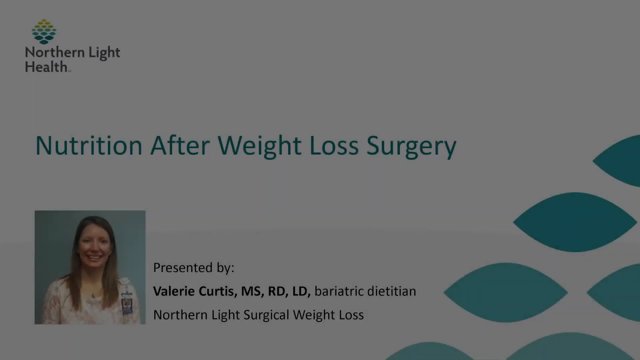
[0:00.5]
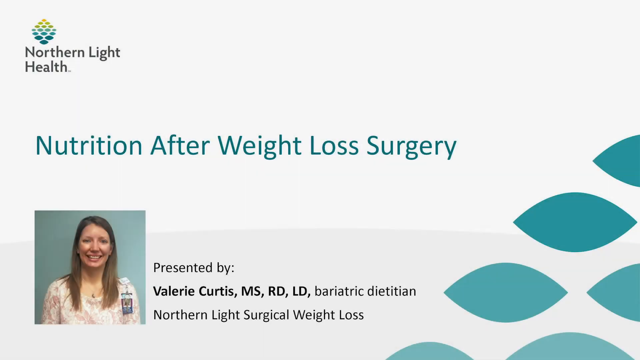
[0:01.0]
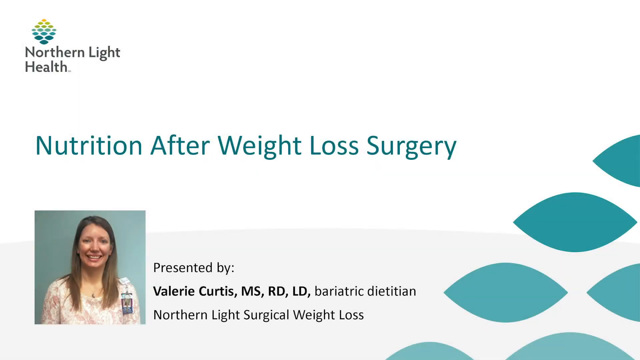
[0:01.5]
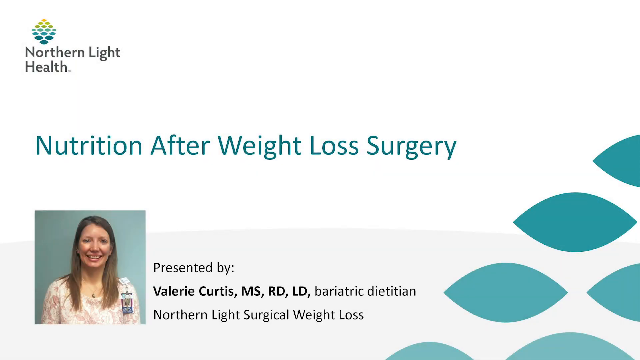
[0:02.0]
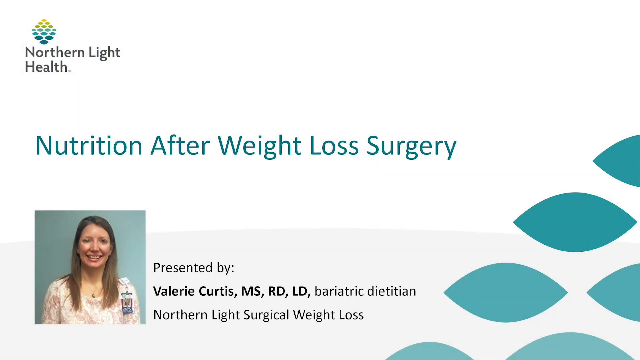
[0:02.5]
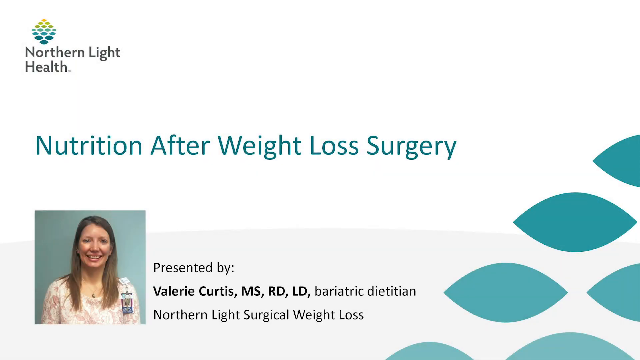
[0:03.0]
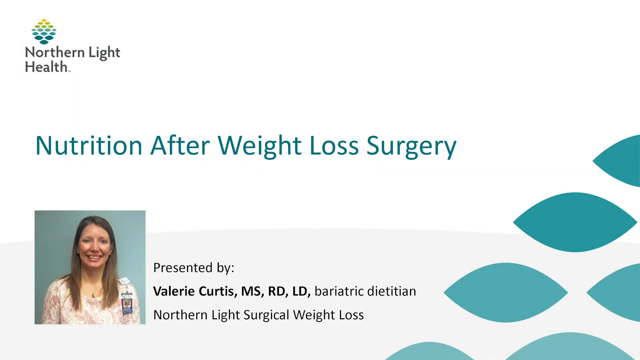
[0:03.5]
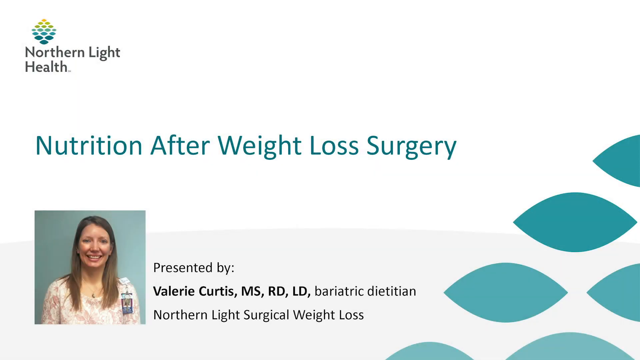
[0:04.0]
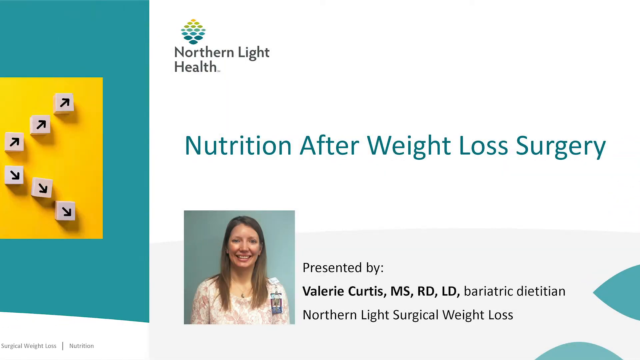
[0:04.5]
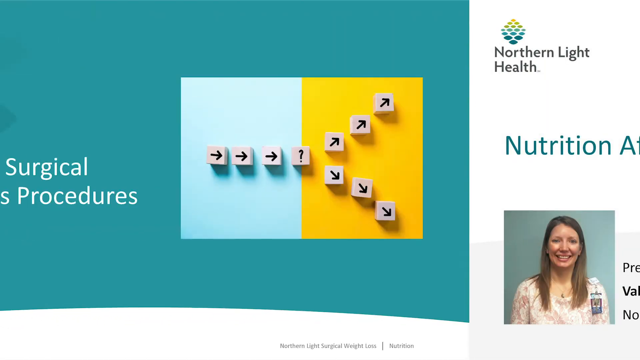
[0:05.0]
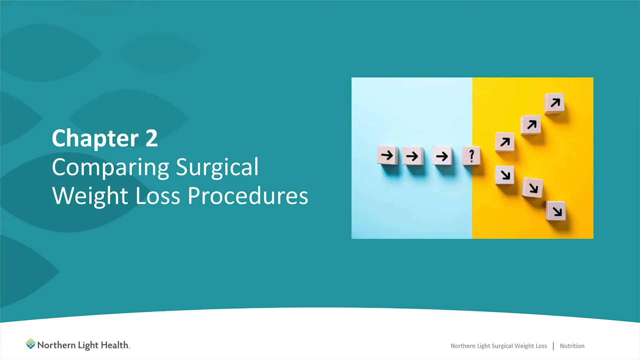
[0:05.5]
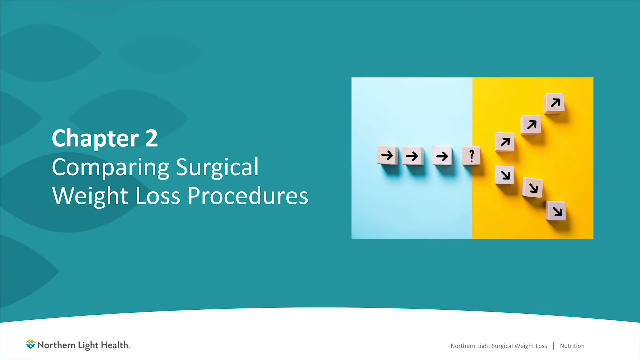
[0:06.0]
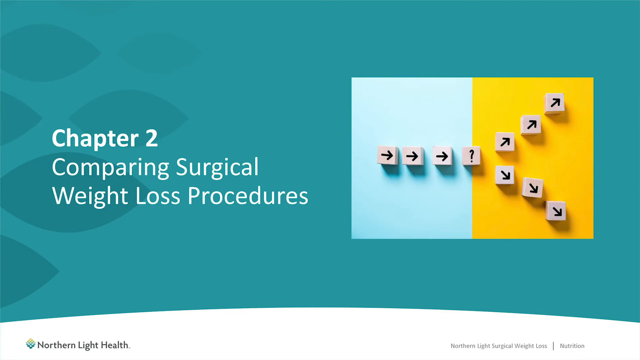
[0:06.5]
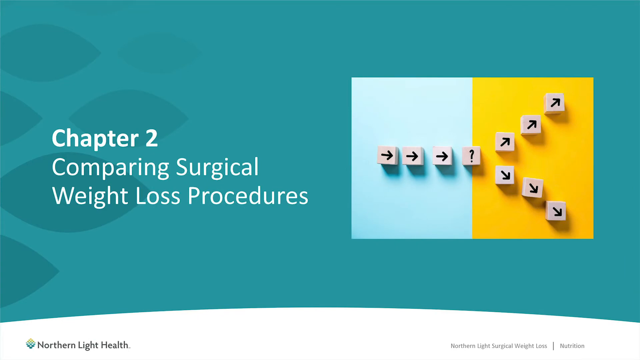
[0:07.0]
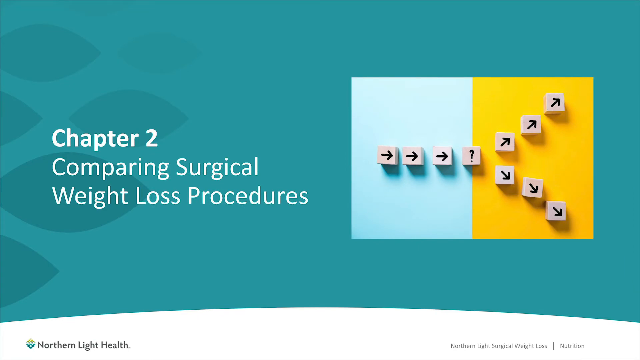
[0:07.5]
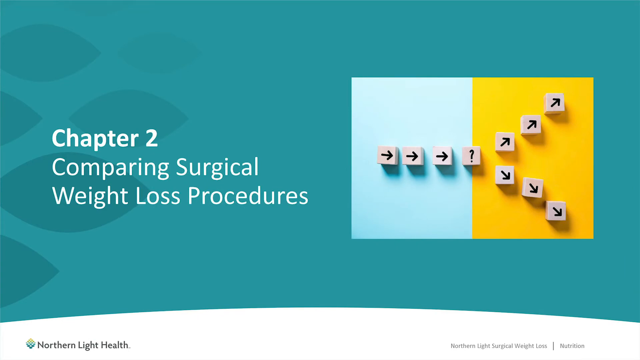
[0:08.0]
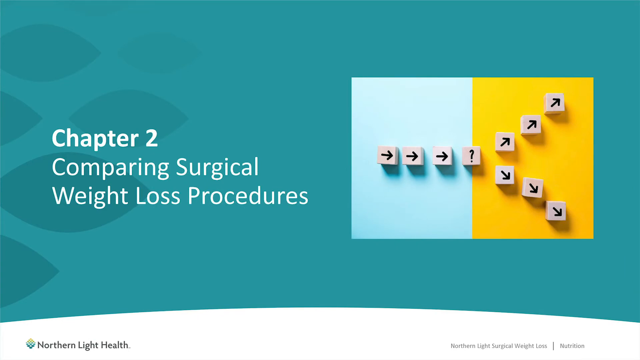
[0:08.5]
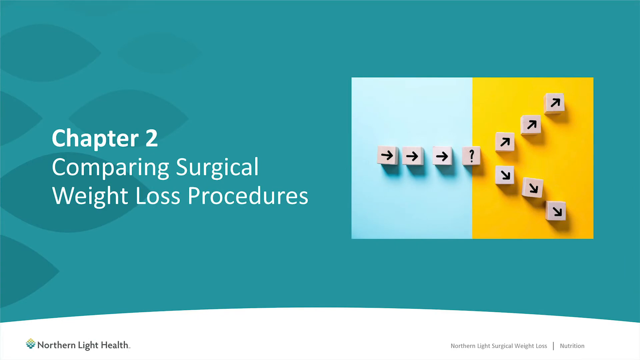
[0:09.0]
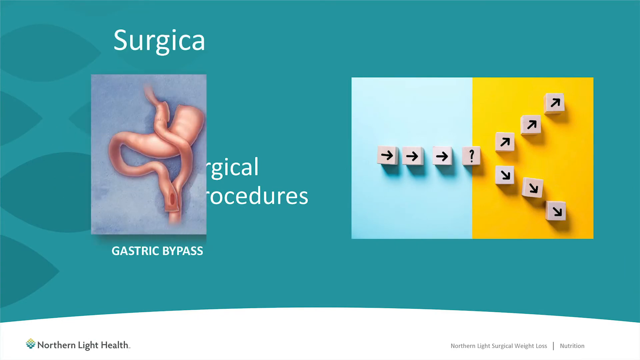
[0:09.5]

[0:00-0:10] A slideshow presentation is on screen. In the upper left-hand corner is a yellow, green, and blue logo with the words "Northern Light Health" beneath it. Below that is the title of the presentation, "Nutrition After Weight Loss Surgery." In the bottom left-hand corner is a photo of a smiling woman with blonde hair who is a healthcare professional. Next to her photo are the words "presented by Valerie Curtis, MSRD LD Bariatric Dietician, Northern Light's Surgical Weight Loss." The slide's background is white. The next slide reads "Chapter 2, Comparing Surgical Weight Loss Procedures" and has an image with a blue half and a yellow half, with several blocks with arrows laid out on this background.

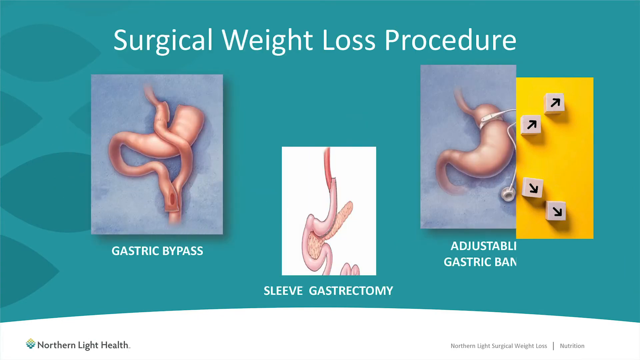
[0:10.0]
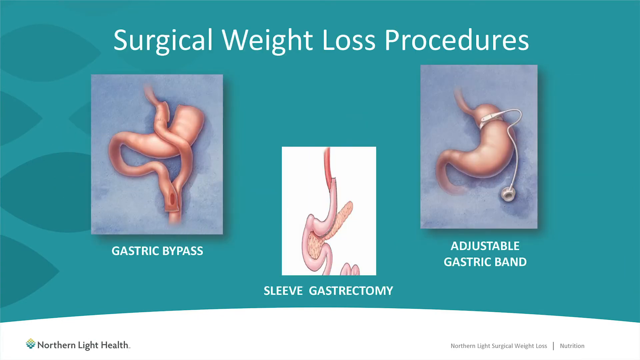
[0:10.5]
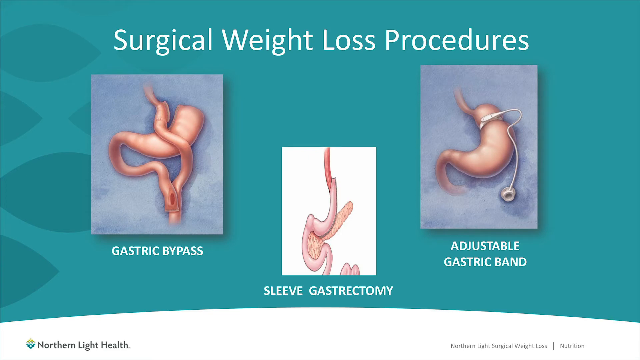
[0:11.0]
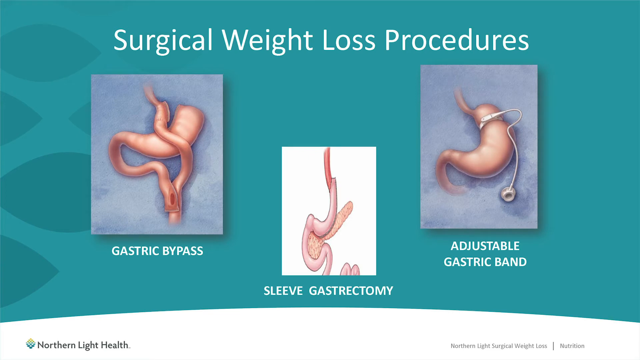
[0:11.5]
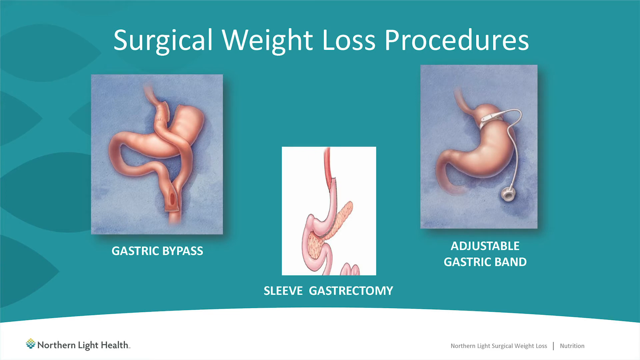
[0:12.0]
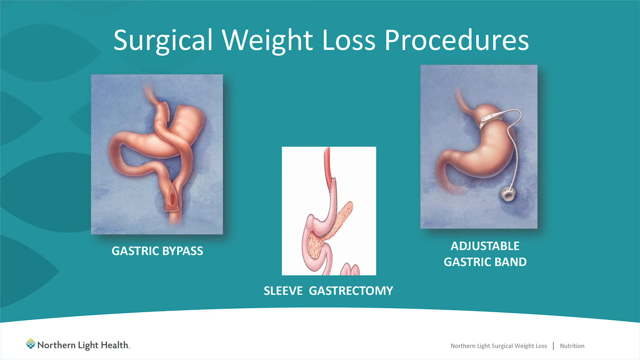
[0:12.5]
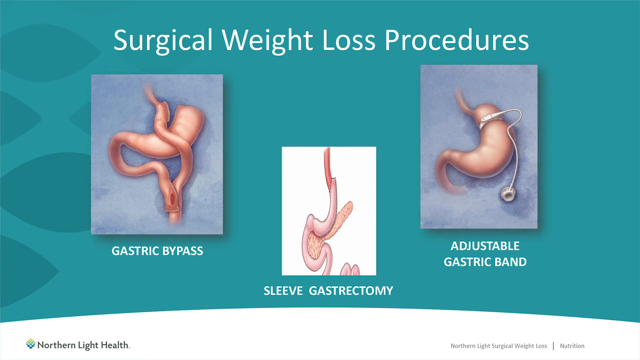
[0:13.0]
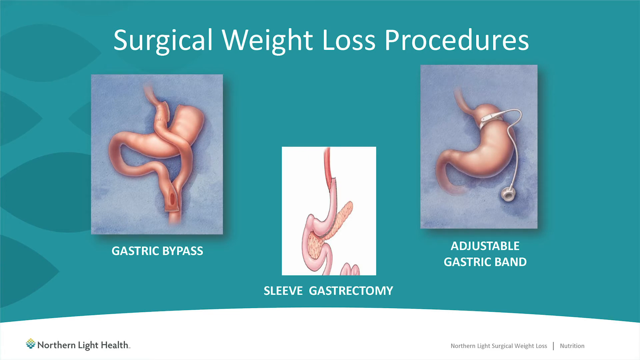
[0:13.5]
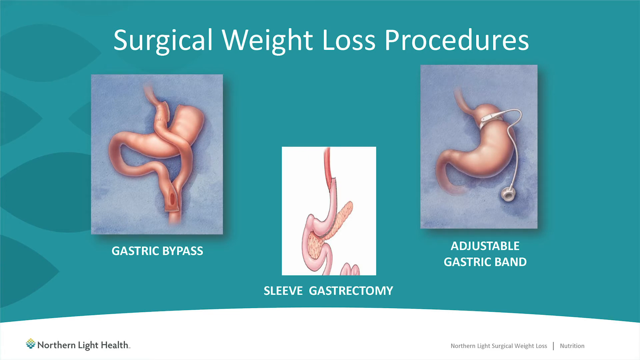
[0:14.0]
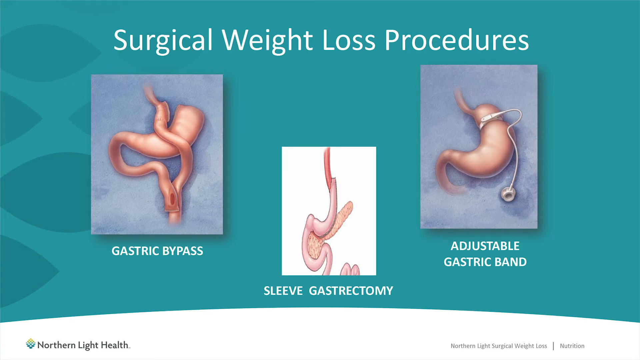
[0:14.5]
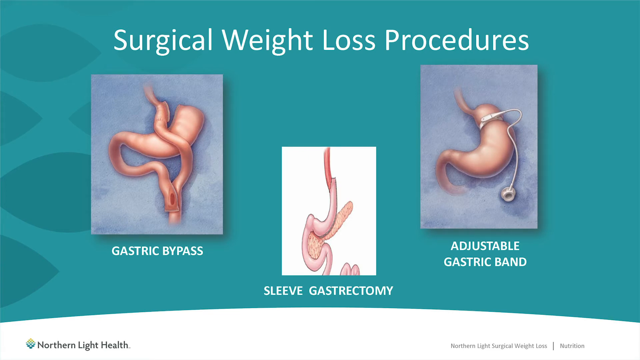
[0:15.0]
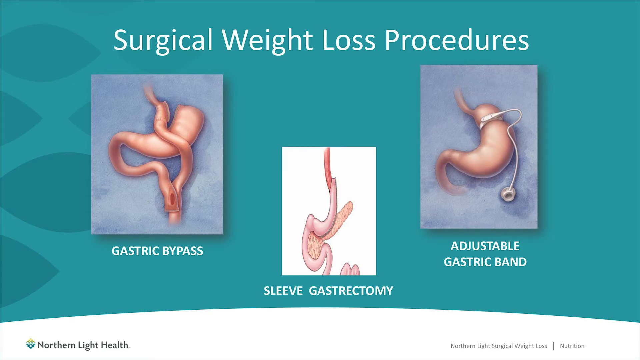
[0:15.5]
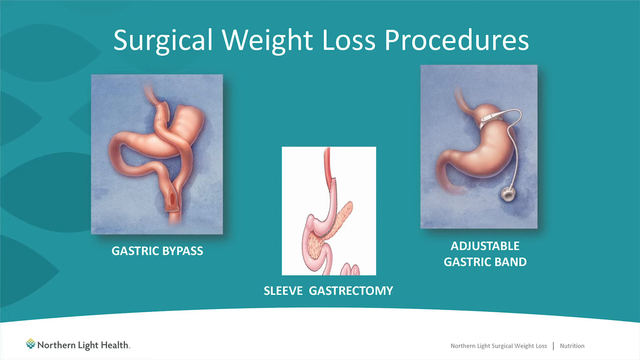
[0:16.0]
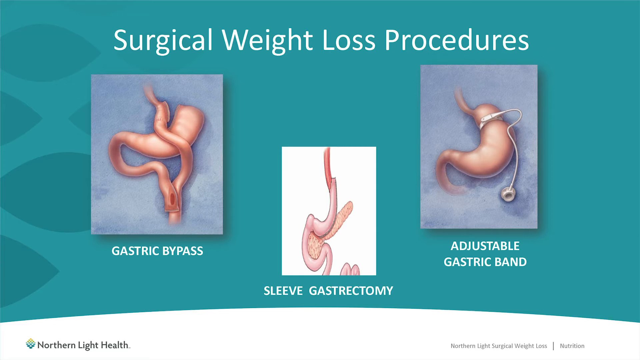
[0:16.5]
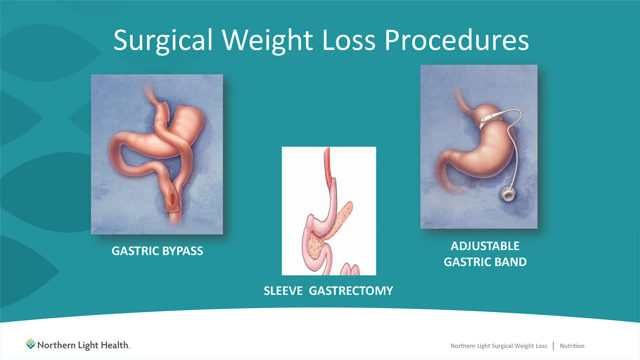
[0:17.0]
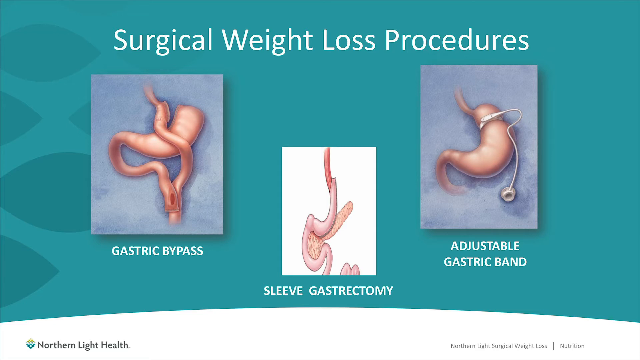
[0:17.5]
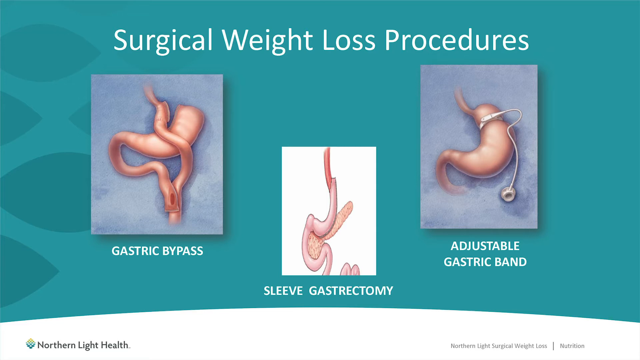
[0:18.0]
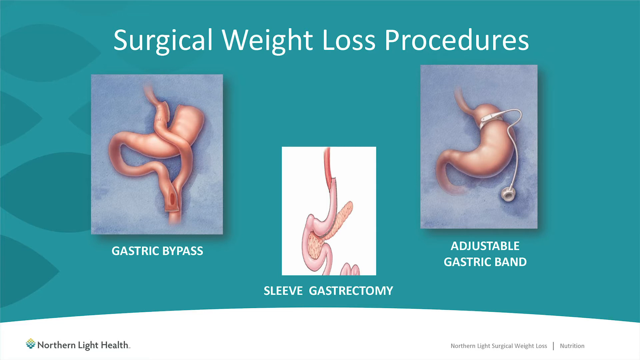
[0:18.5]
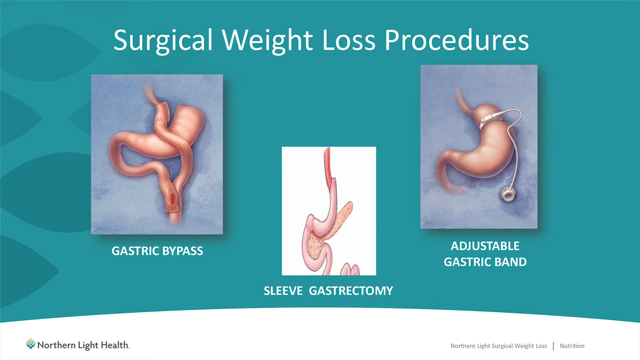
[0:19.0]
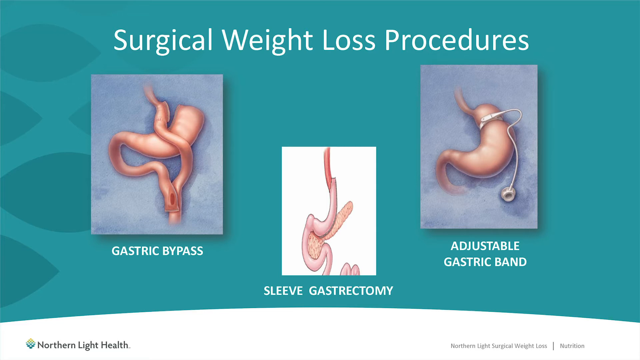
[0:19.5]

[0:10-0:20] A PowerPoint slide shows the words "surgical weight loss procedures." The first item says "gastric bypass" and has a picture or illustration of a stomach. The second says "sleeve gastrectomy." The third is "adjustable gastric band," which also has an illustration of a stomach. The slide is set against a textured blue background, and the bottom part of the slide is white. A yellow, blue, and green logo reading "Northern Light Health" is in the bottom left-hand corner, and in the bottom right-hand side of the screen are words in a black font that are too small to read.